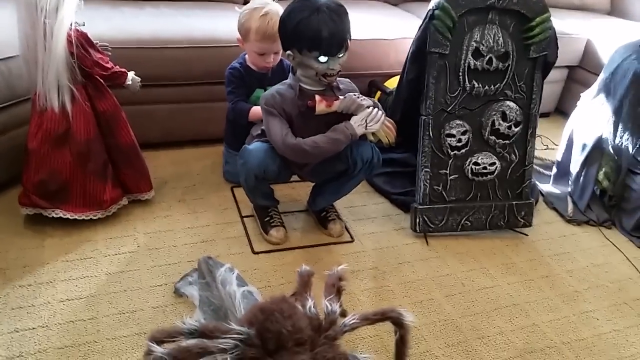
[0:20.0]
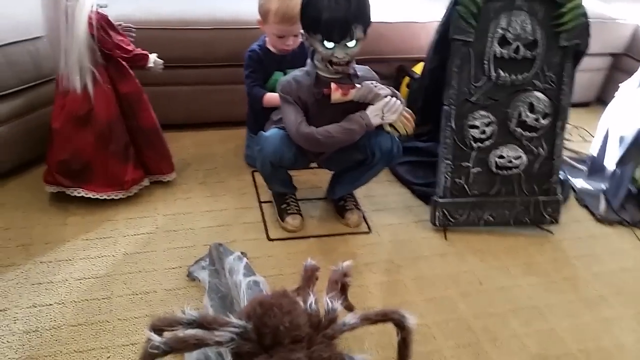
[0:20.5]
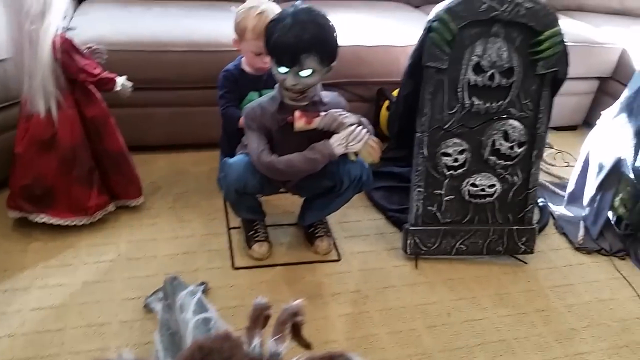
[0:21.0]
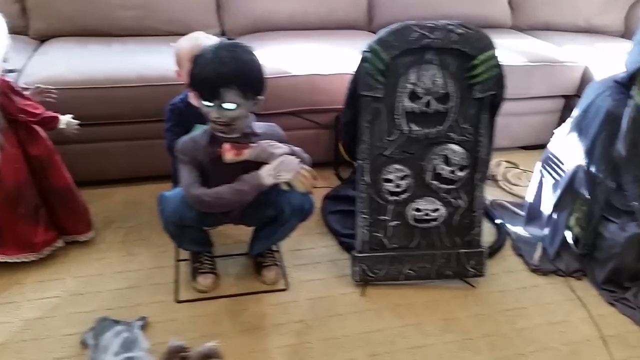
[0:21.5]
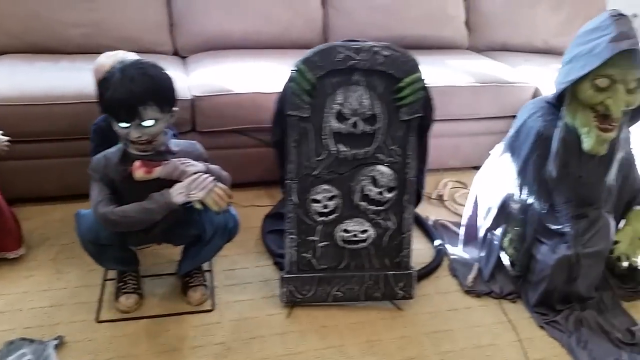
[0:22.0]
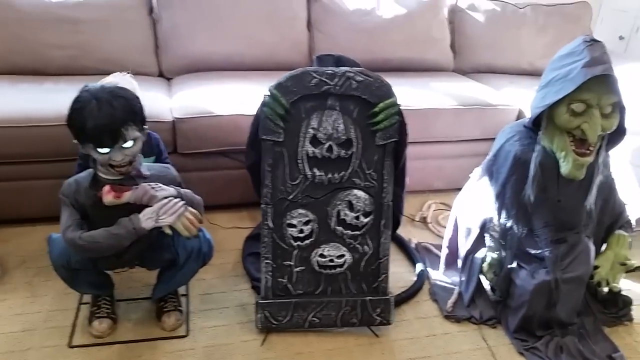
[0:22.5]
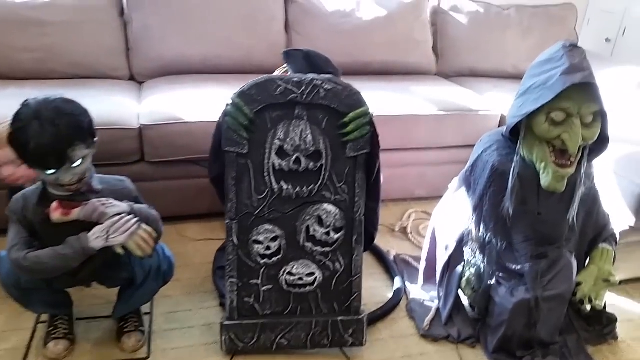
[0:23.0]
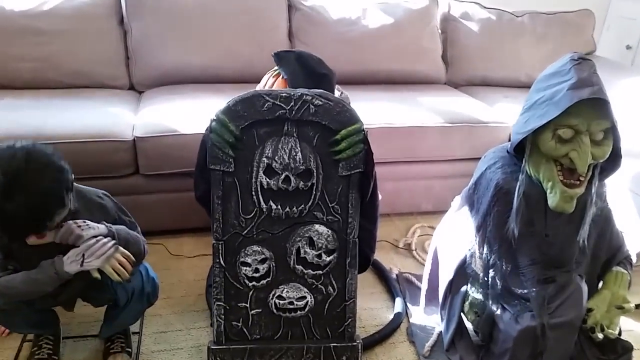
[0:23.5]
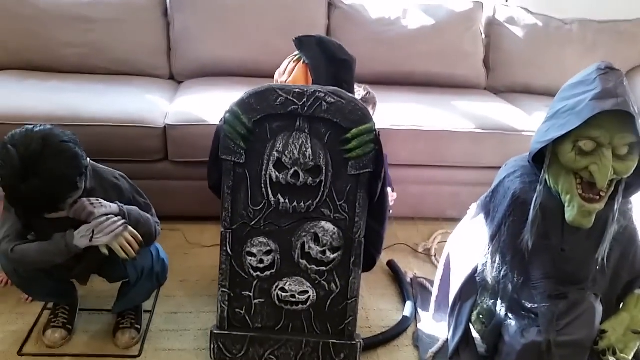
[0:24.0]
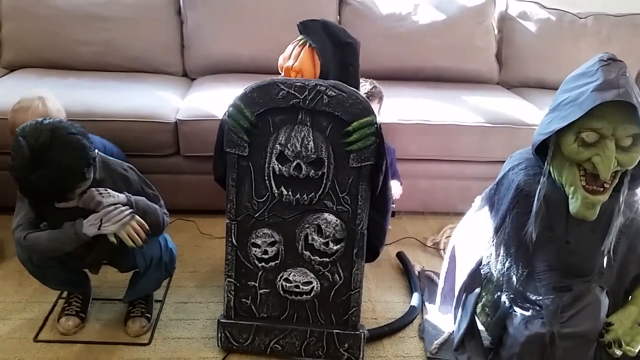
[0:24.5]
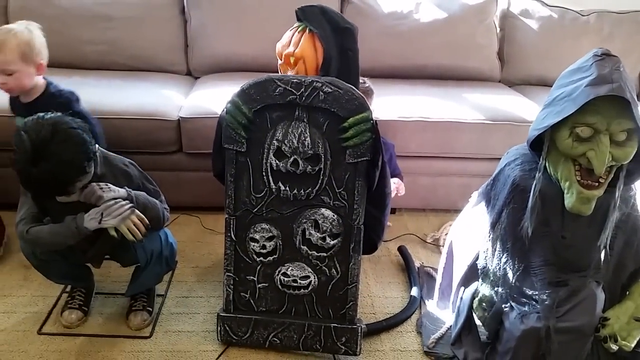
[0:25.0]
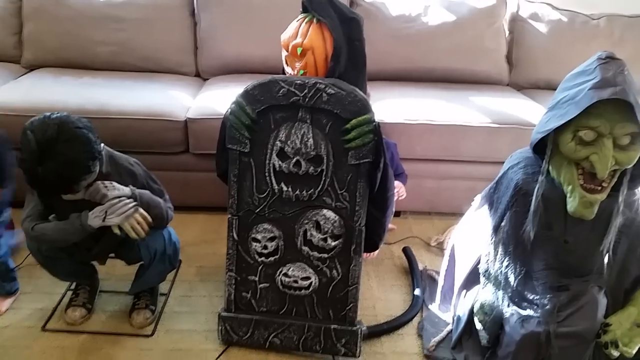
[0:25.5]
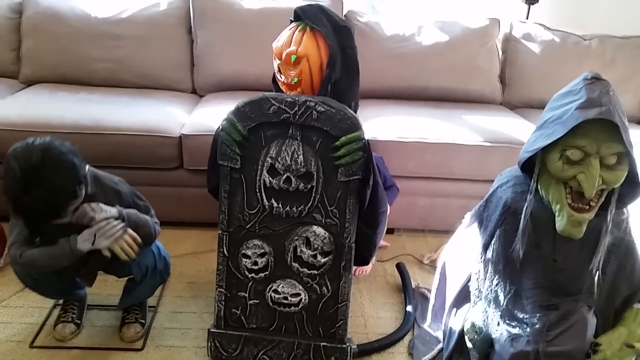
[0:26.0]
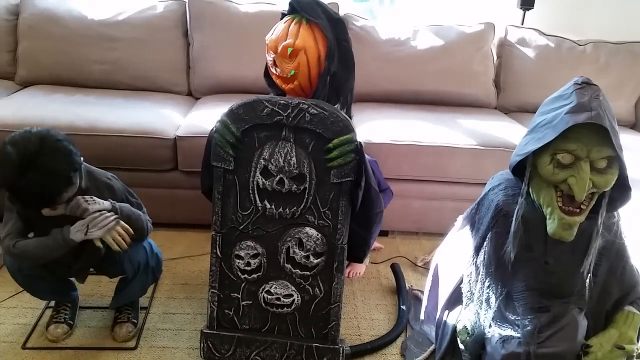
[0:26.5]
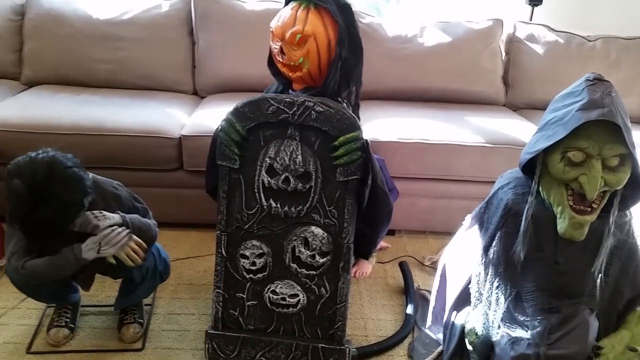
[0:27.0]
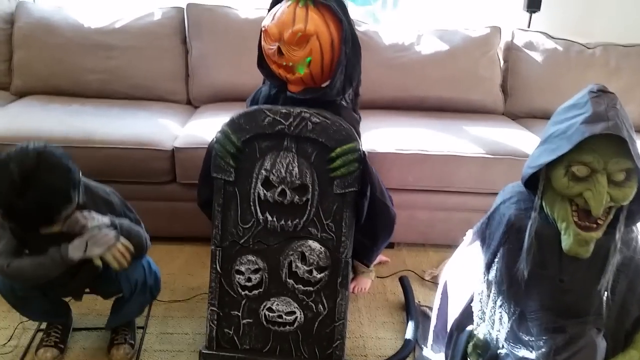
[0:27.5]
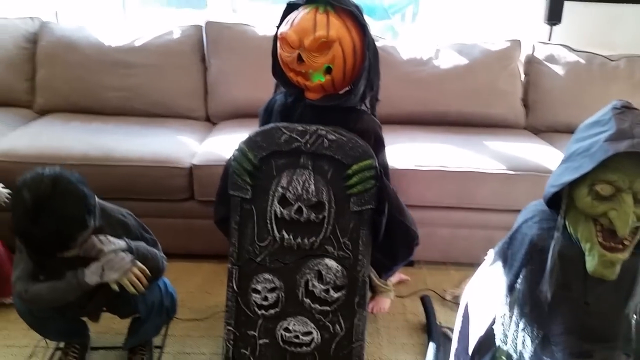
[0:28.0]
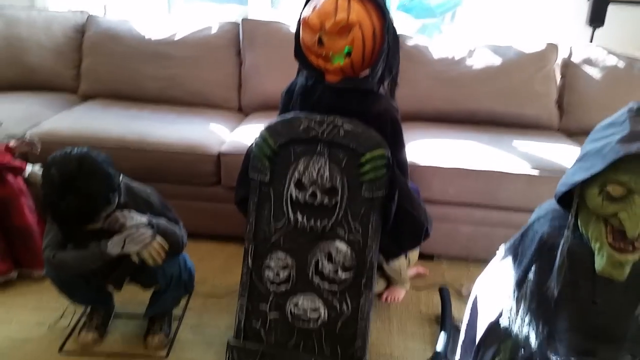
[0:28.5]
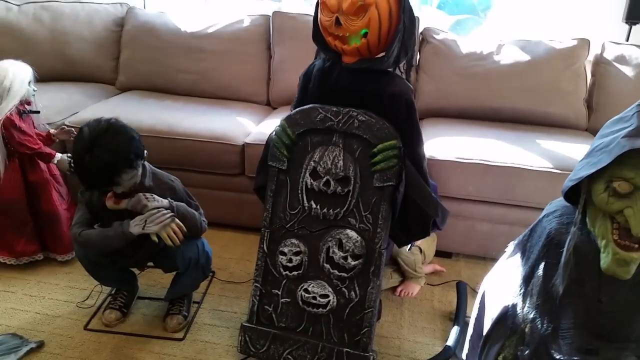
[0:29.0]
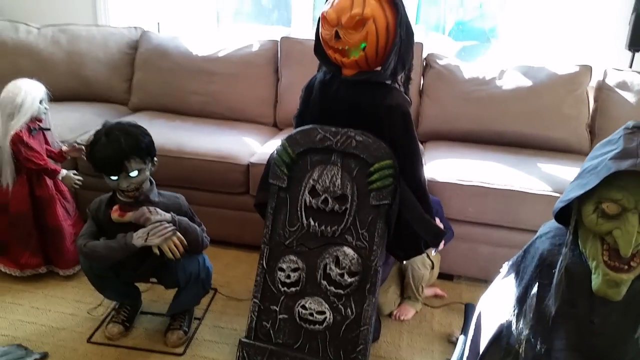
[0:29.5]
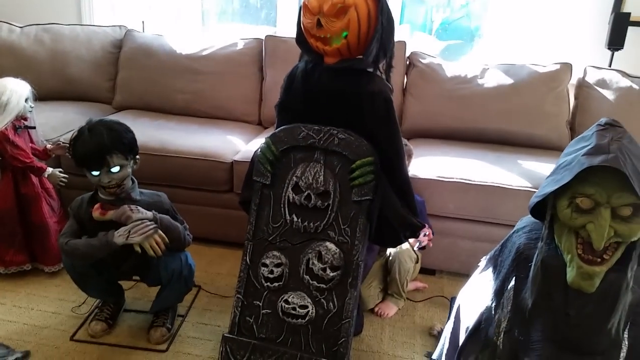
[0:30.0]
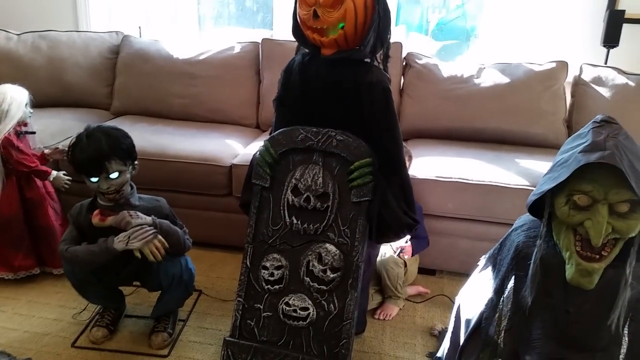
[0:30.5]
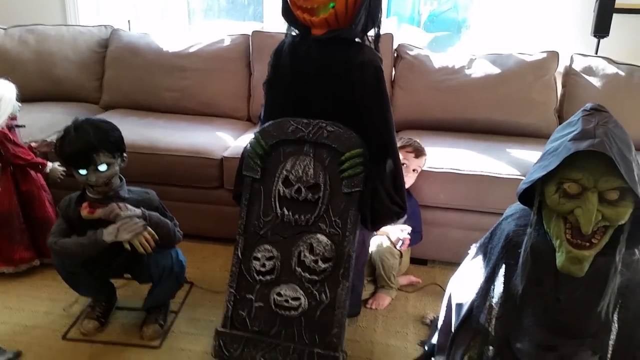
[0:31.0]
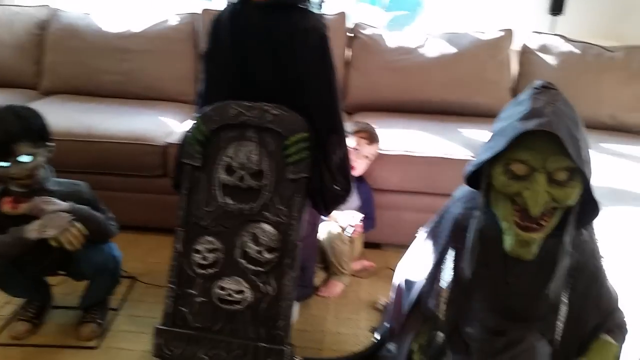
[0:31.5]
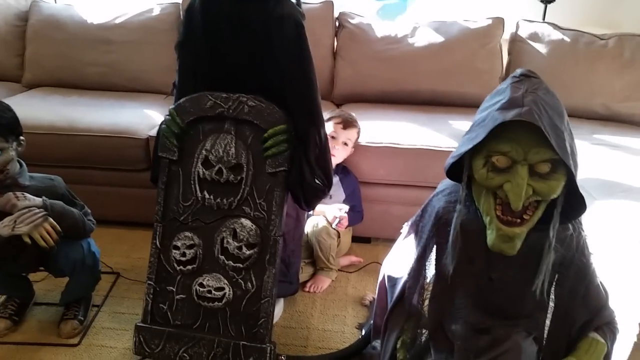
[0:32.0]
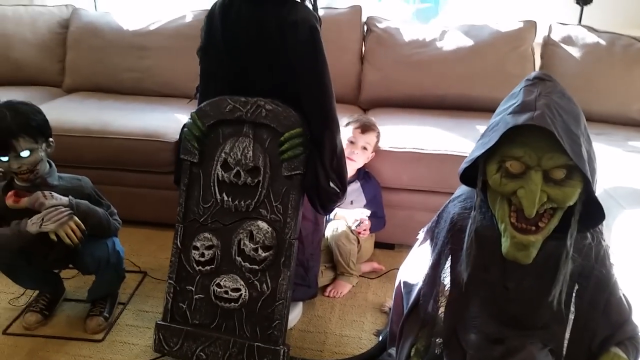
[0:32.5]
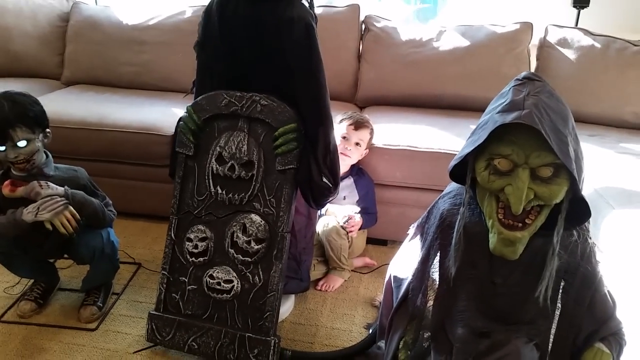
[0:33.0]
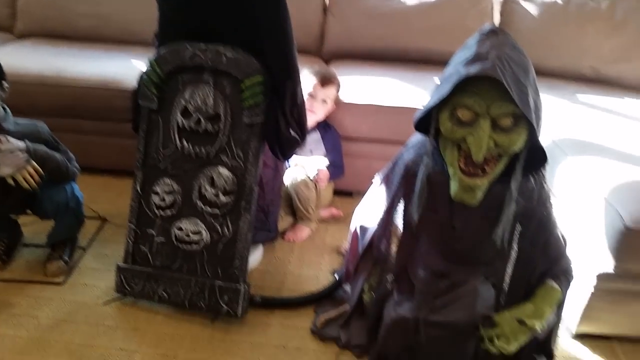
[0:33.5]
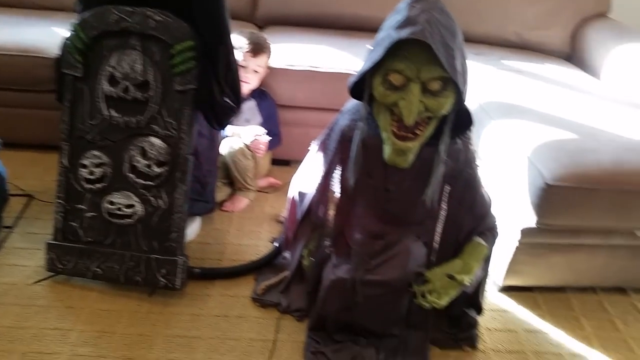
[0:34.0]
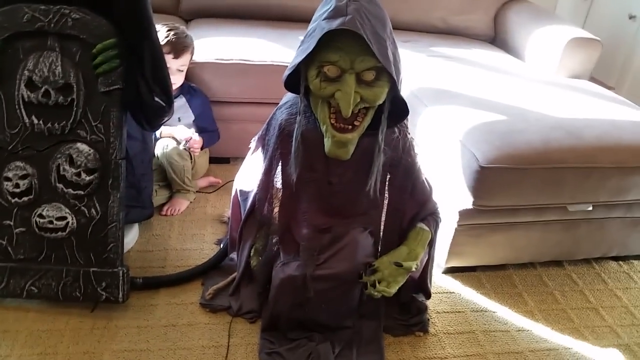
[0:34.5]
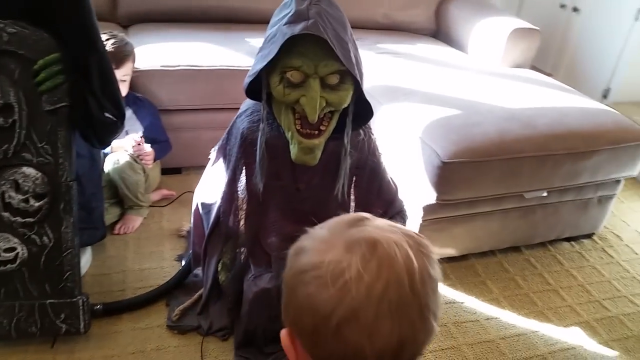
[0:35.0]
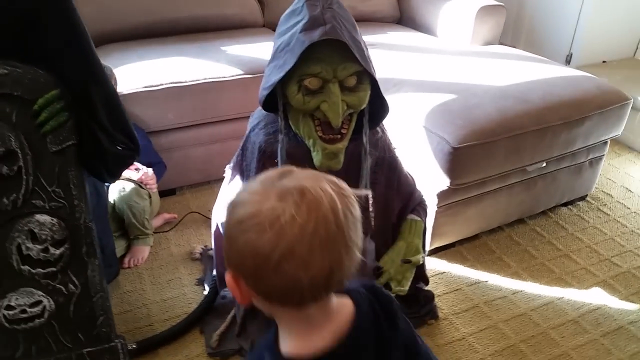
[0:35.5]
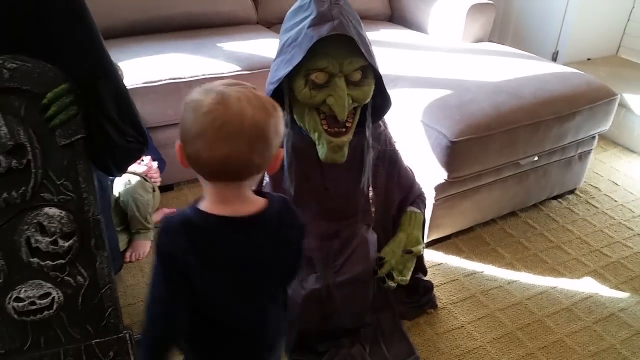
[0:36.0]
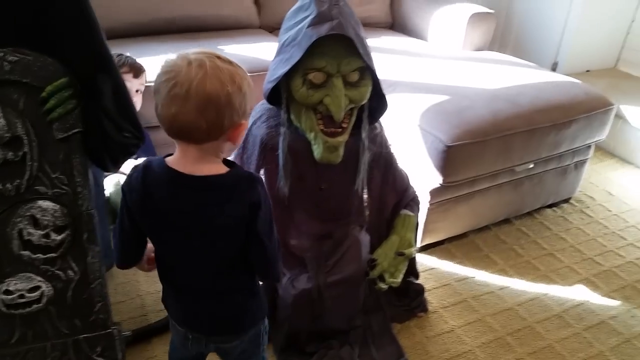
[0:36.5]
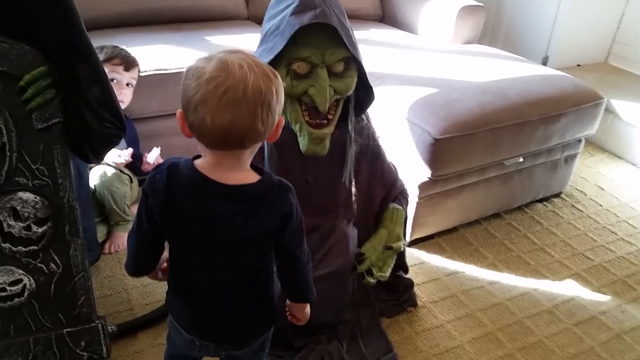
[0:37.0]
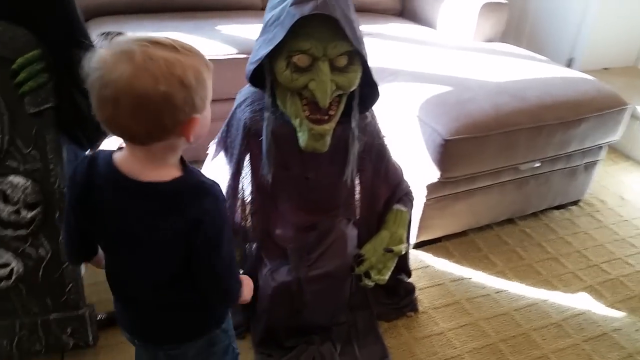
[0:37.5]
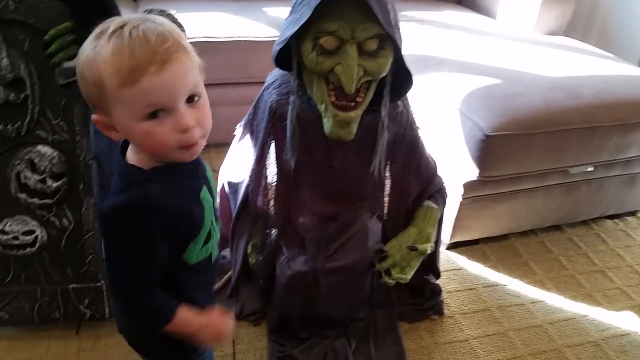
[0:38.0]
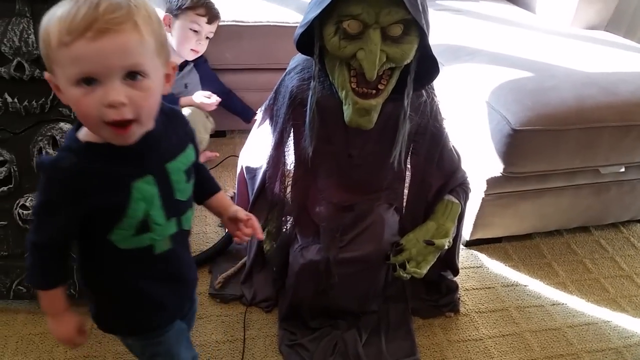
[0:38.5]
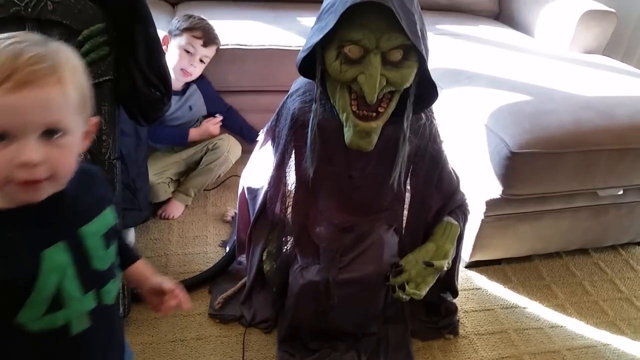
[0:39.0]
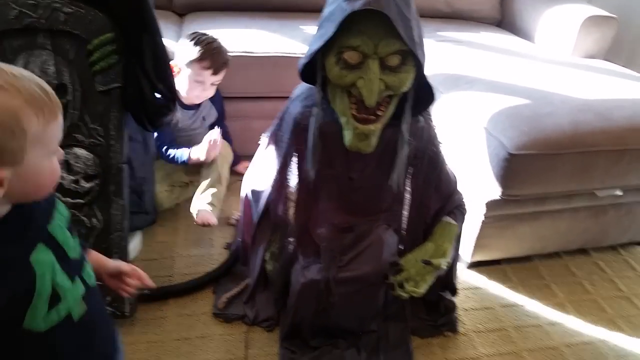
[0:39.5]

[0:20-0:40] A closer view of the animatronics shows two little boys, one with blonde hair and one with brown hair, playing around them. Part of what looks like a large furry tarantula animatronic is visible. The green-faced witch is seen closer up: she has sharp-looking rotting teeth and hands that look almost clawed, her mouth is open, and her eyes appear yellowish, as if they might glow. The blonde boy wears a navy blue shirt and blue pants. The brown-haired boy wears light-colored pants and a long-sleeved t-shirt with blue sleeves and a gray center portion. A little of the doll's face is visible to the left.